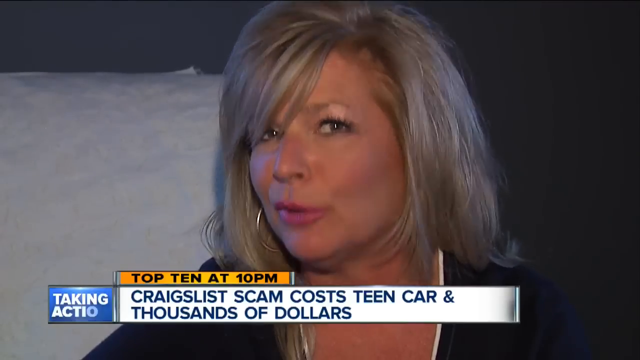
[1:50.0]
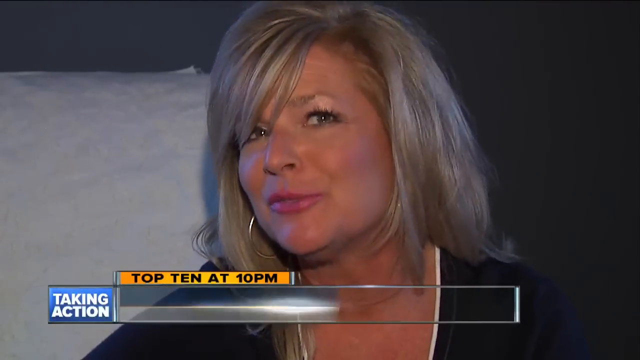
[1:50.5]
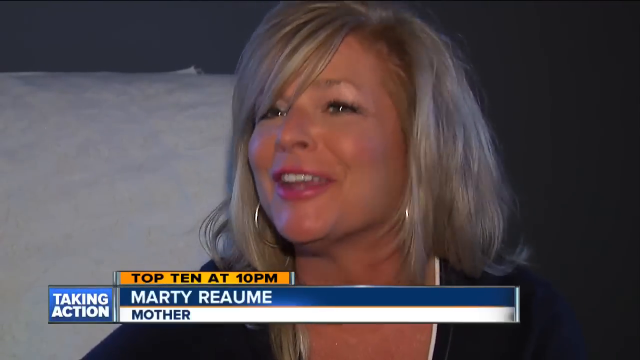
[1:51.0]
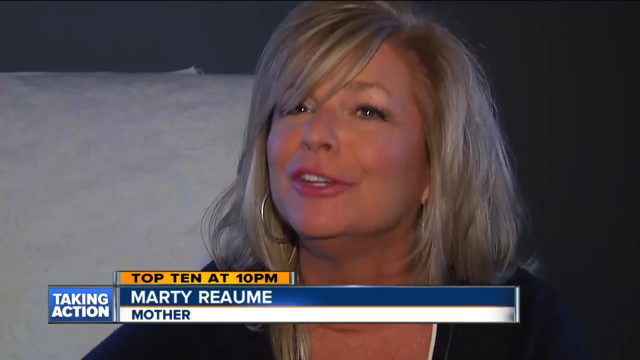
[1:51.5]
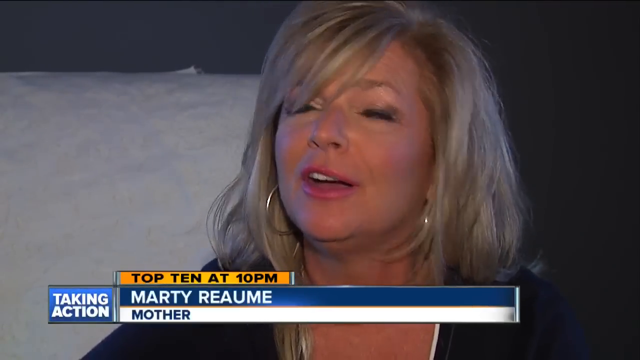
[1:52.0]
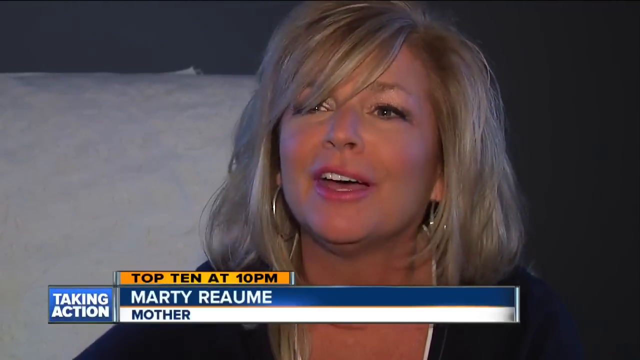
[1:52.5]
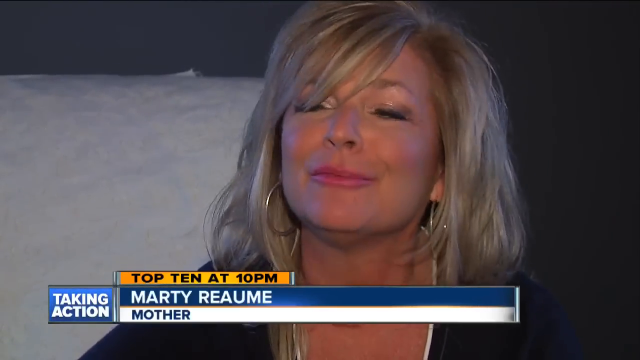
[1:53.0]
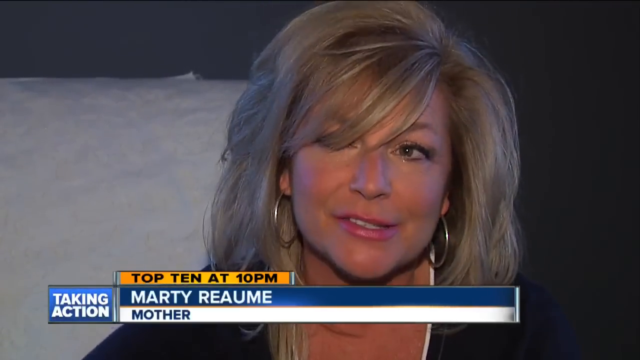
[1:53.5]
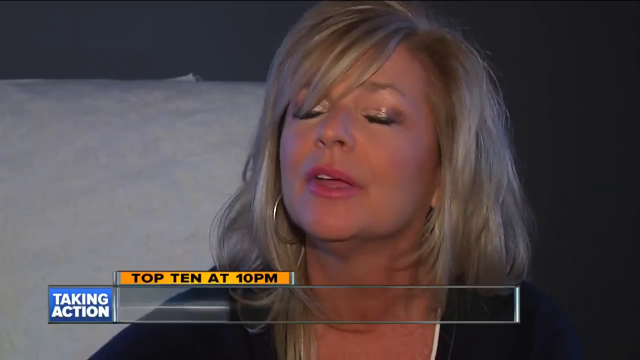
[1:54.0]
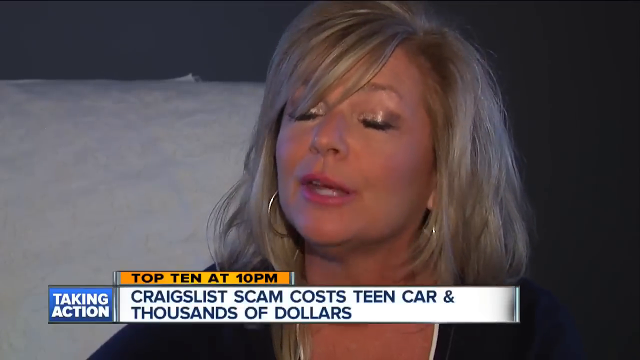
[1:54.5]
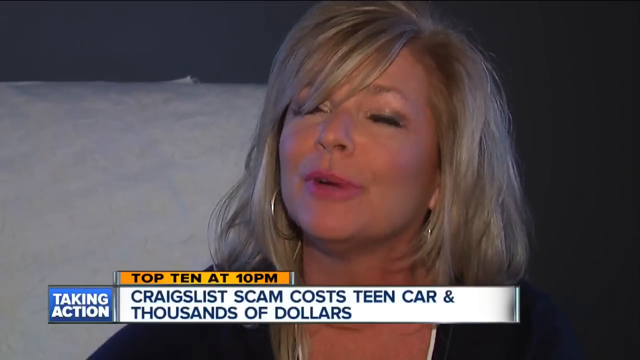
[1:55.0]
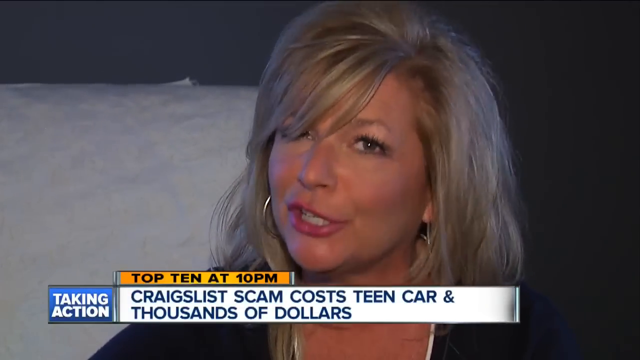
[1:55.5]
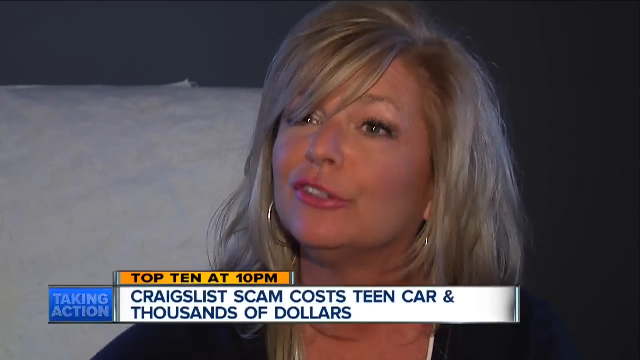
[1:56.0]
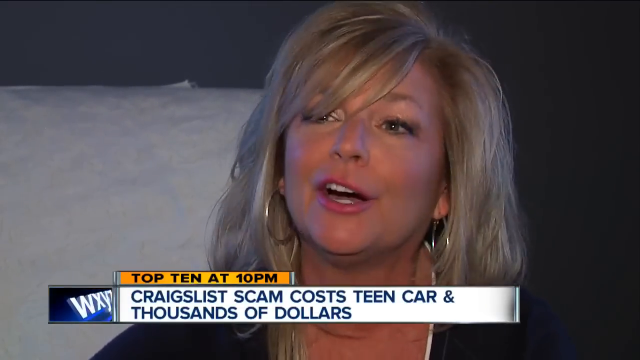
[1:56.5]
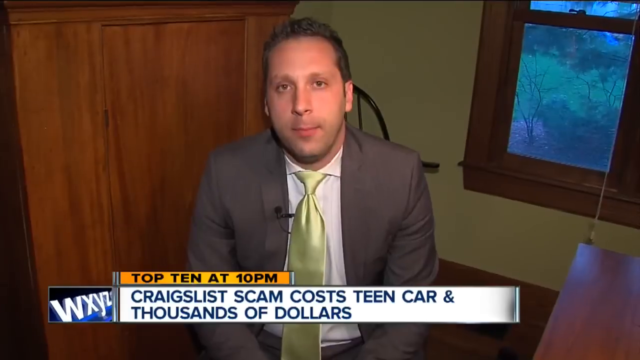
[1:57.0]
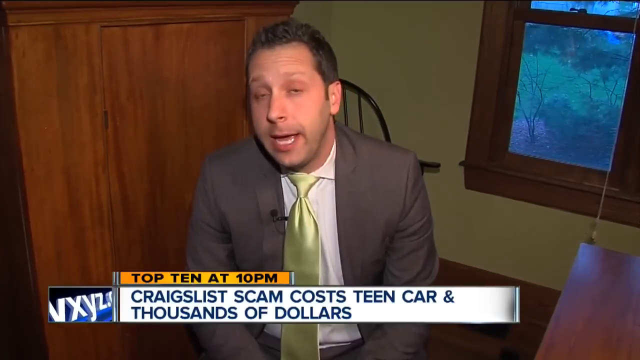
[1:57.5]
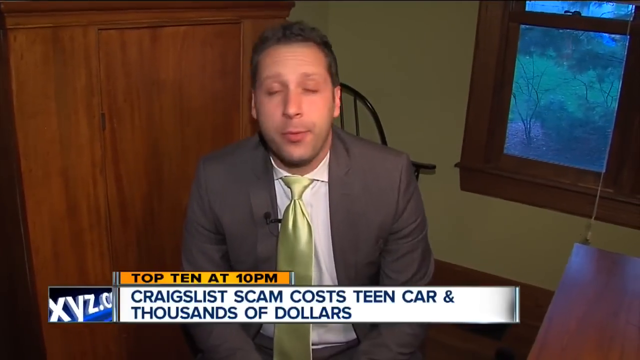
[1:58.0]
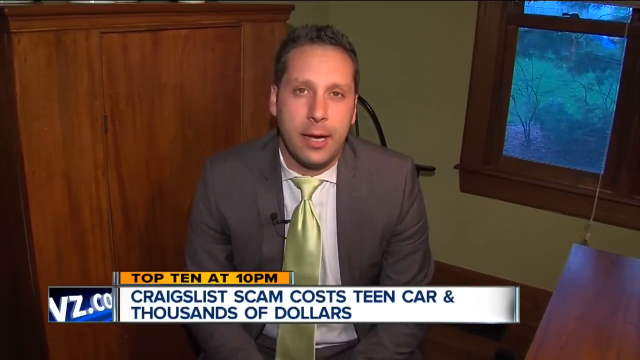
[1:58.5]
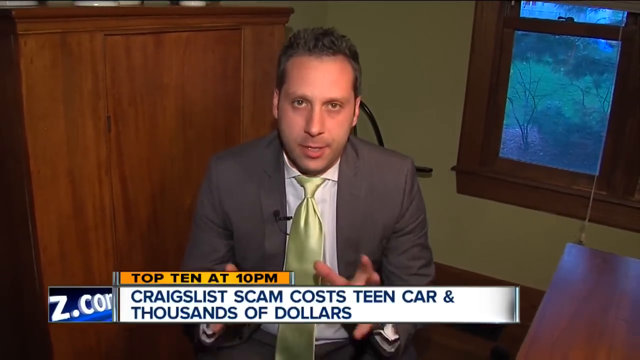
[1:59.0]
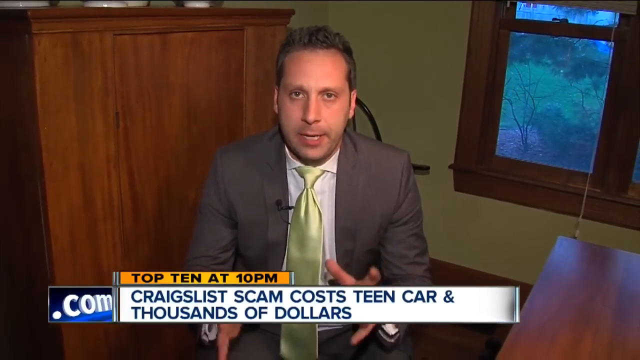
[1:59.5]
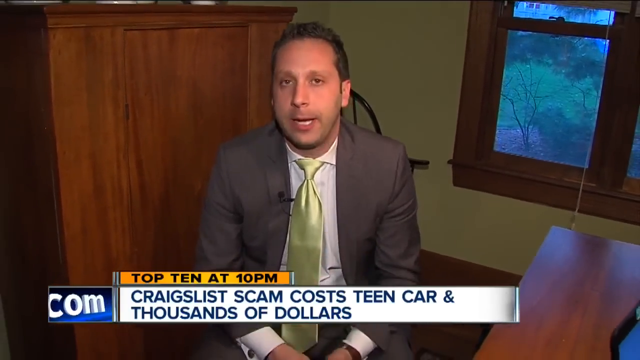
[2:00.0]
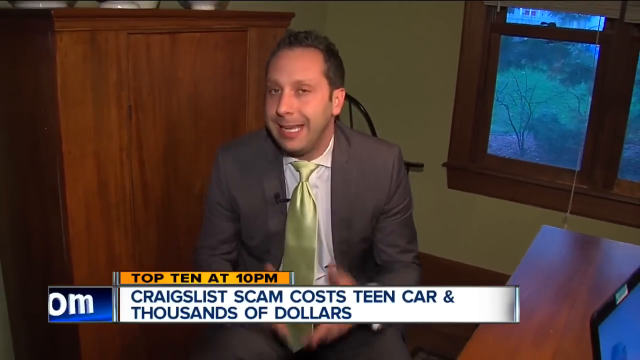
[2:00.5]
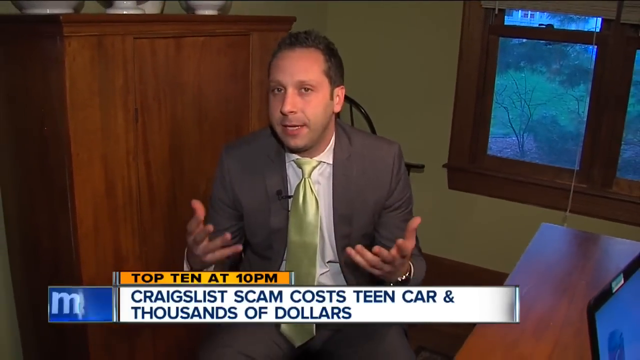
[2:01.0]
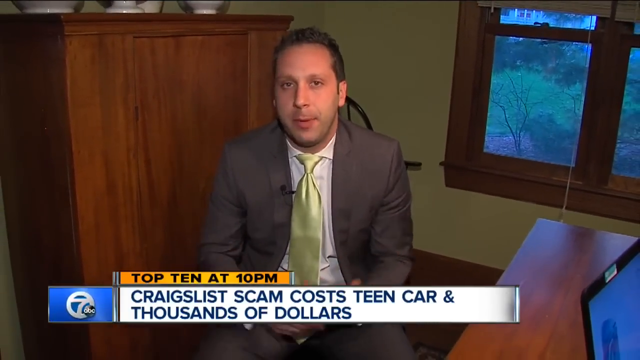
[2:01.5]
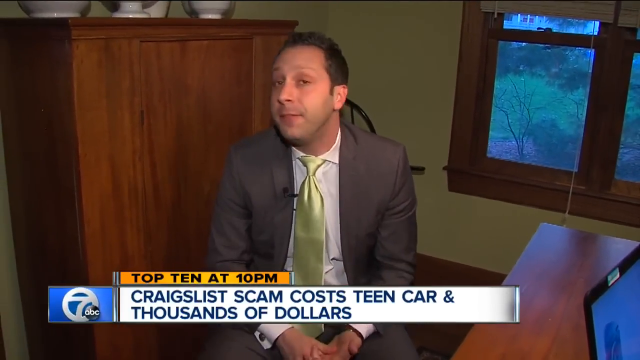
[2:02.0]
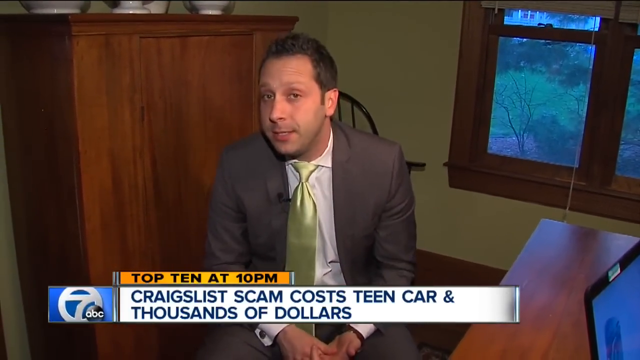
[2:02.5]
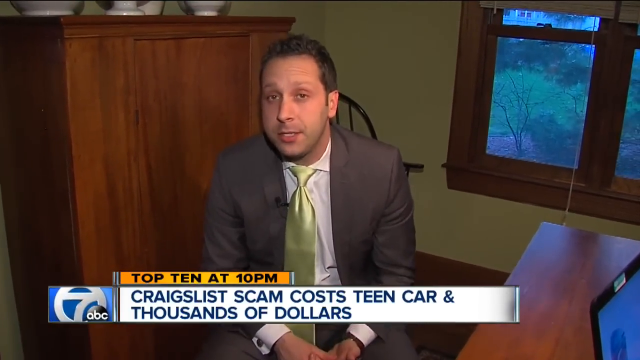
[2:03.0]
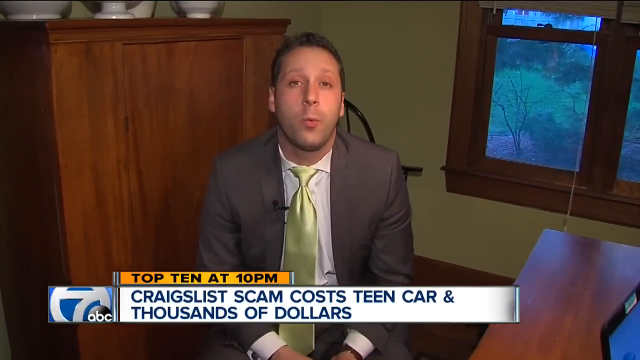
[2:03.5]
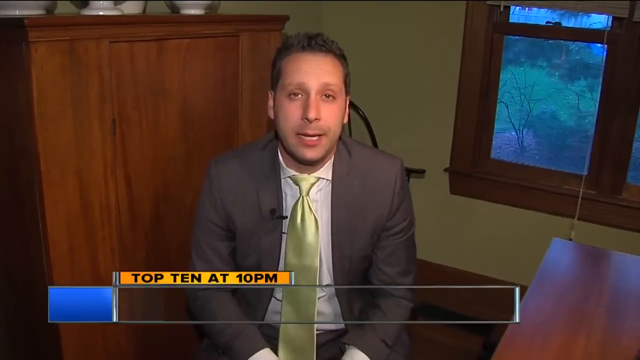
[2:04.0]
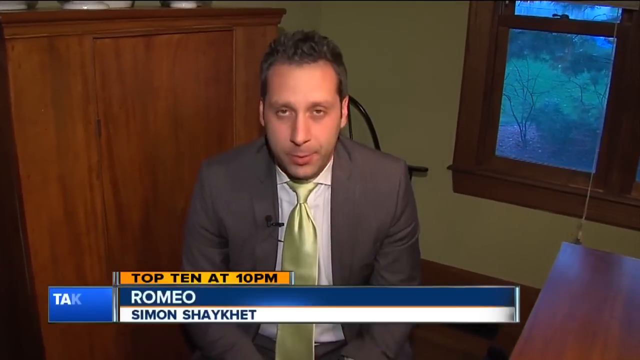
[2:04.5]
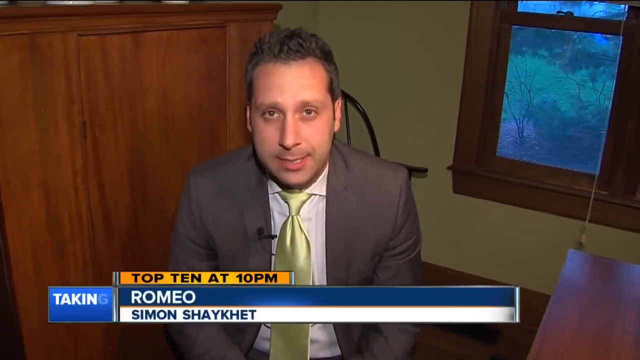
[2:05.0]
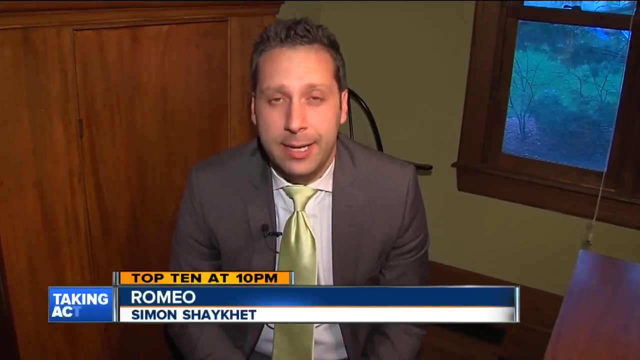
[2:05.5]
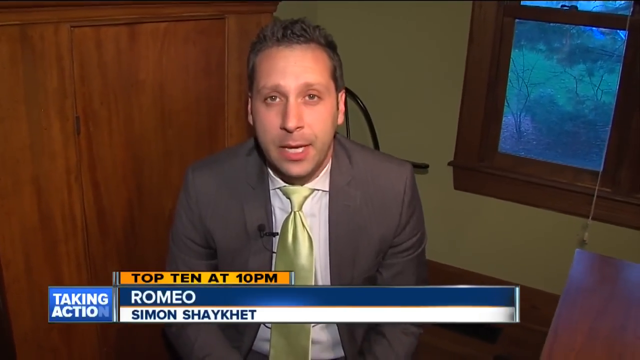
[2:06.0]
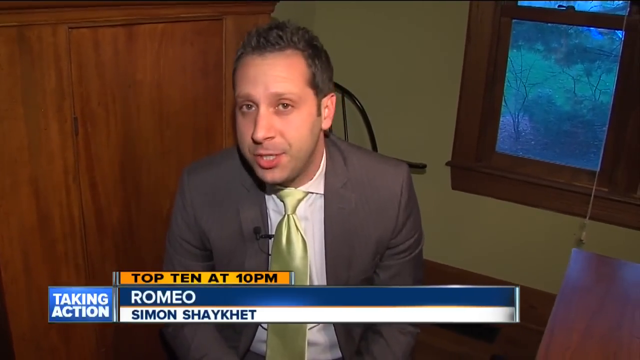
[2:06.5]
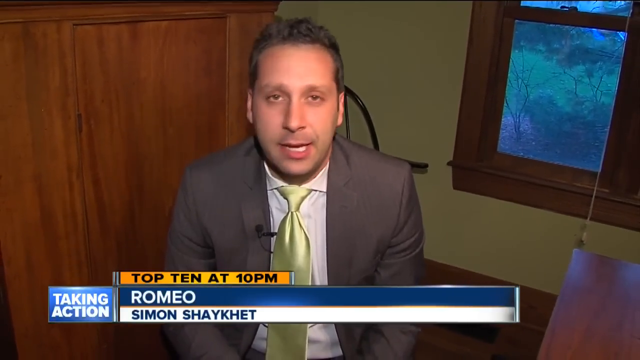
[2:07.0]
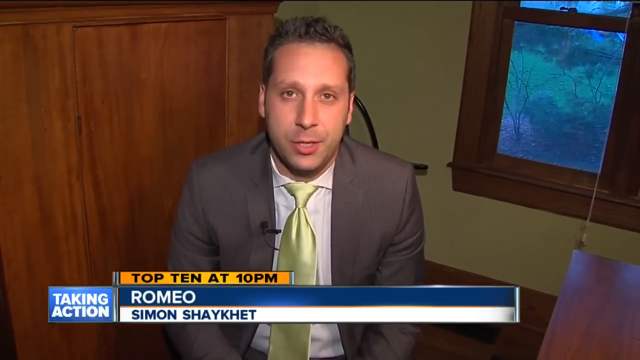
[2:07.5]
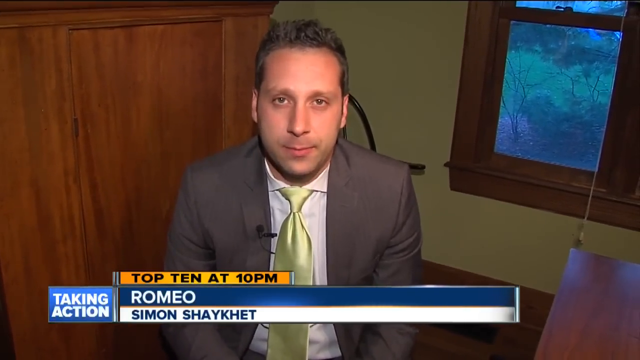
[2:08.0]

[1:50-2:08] The mother talks as on-screen text identifies her as Marti Reumi, the mother. She has a slight smile, almost as if reminiscing, and nods her head a lot as she talks. The banner "Craigslist scam cost teen car and thousands of dollars" appears. The view switches back to the male news anchor, seated and looking directly at the camera. He wears a brown-gray suit, a bright yellow tie and a white shirt, is probably in his 40s, has styled hair, and his microphone is clipped to his lapel. They look to be sitting in an older house with wood furniture, windows encased in wood, and wood trim; ceramic vases are on top of one of the pieces of wood. The window coverings are the kind that scrunch up as they are pulled to the top. The table is all wooden, a cherry-colored wood, and everyone sits in darker wooden chairs.